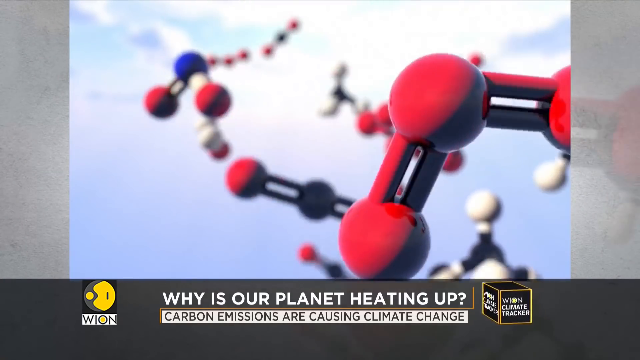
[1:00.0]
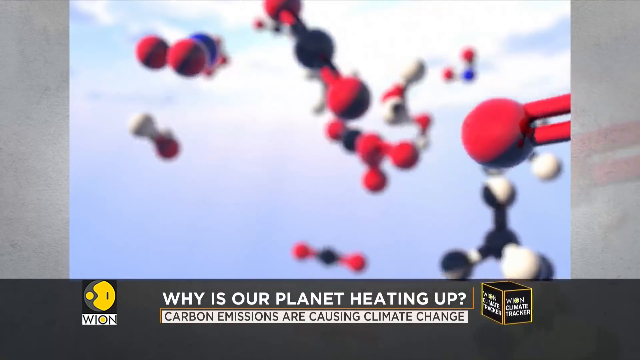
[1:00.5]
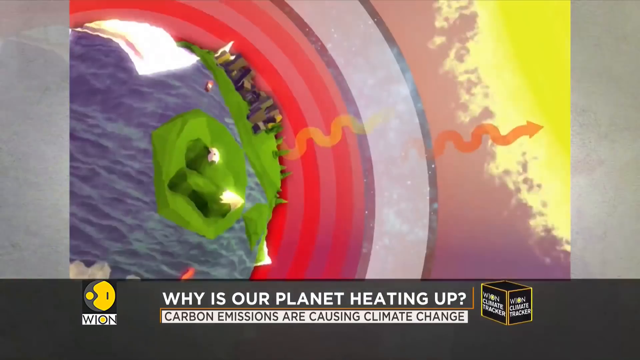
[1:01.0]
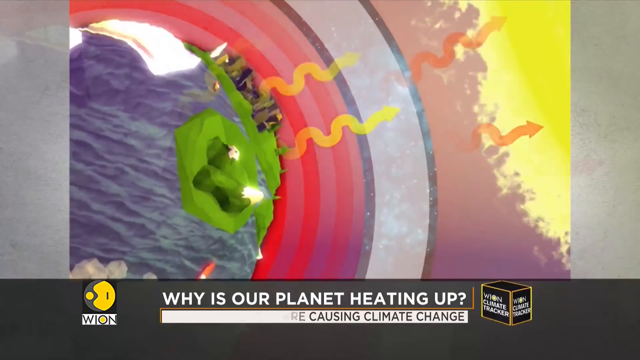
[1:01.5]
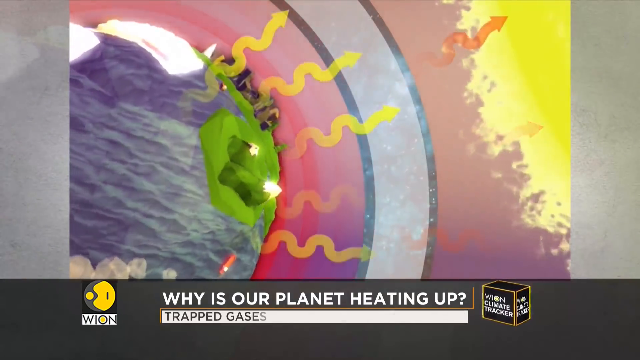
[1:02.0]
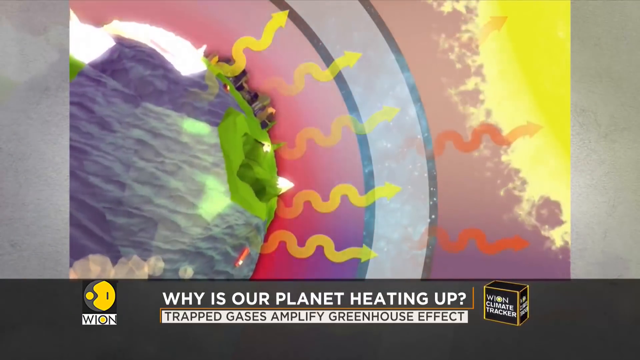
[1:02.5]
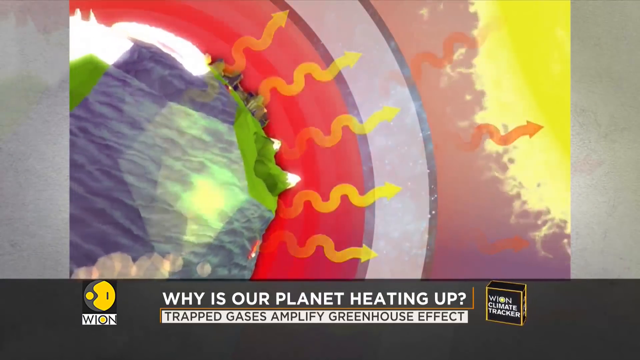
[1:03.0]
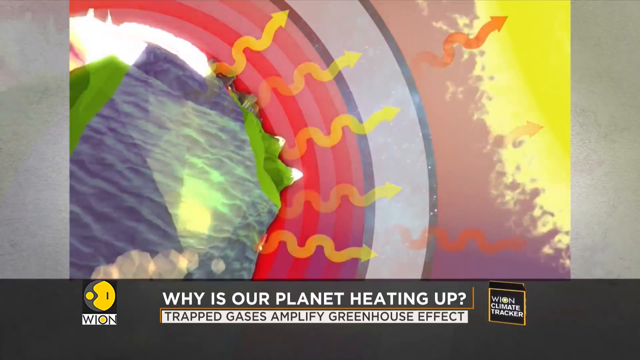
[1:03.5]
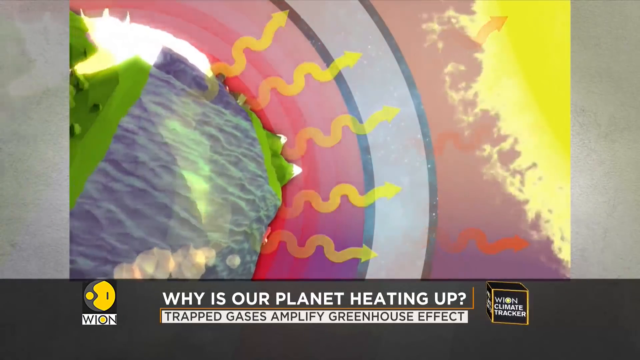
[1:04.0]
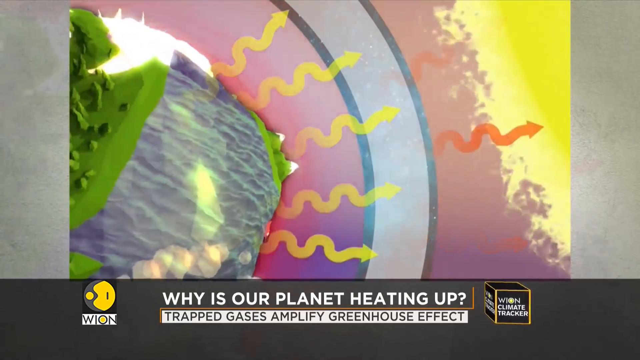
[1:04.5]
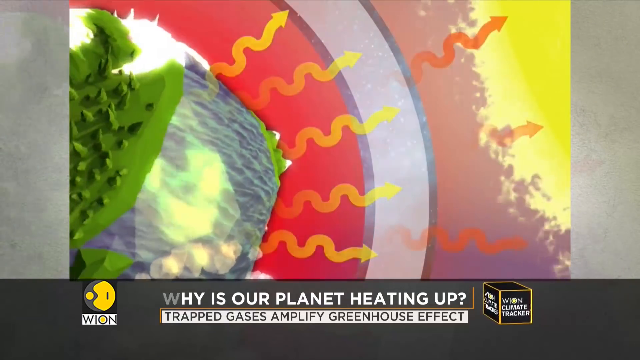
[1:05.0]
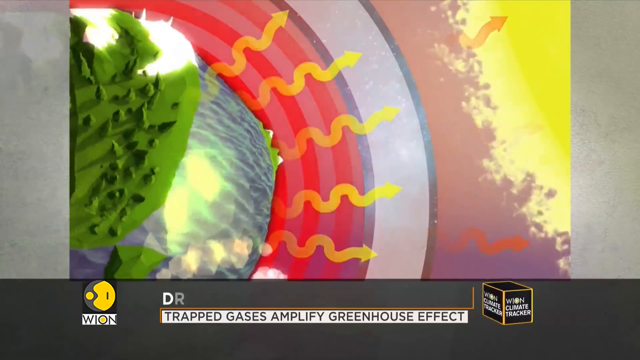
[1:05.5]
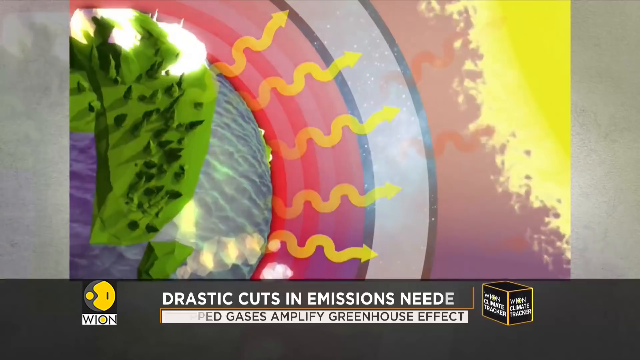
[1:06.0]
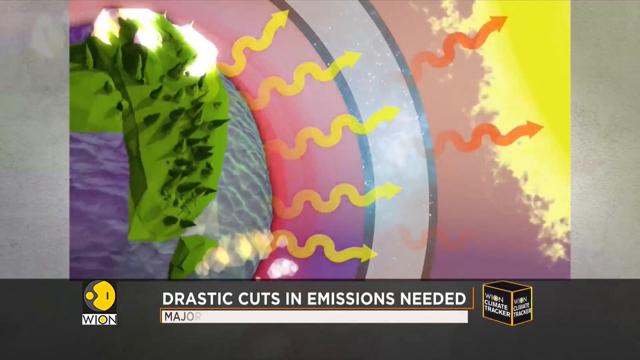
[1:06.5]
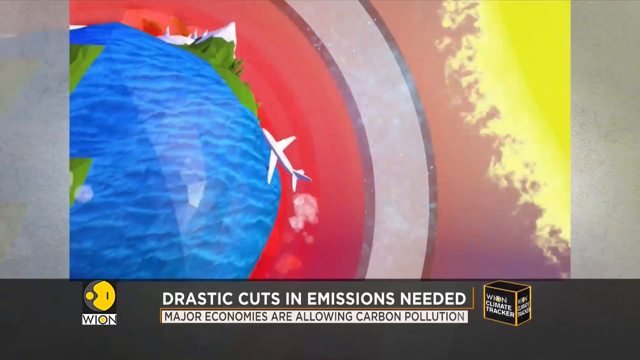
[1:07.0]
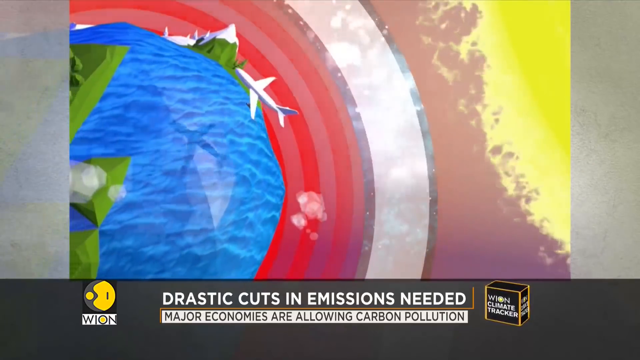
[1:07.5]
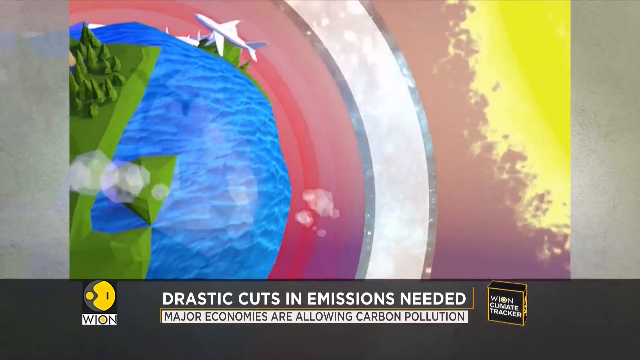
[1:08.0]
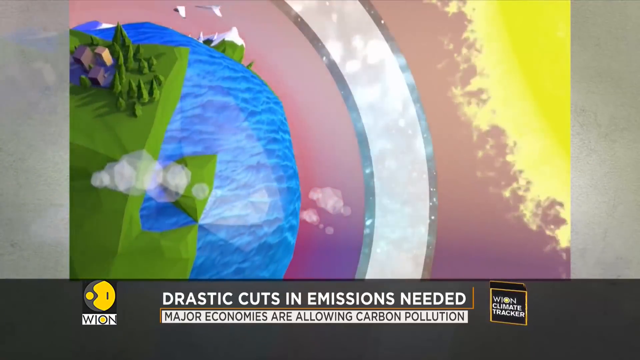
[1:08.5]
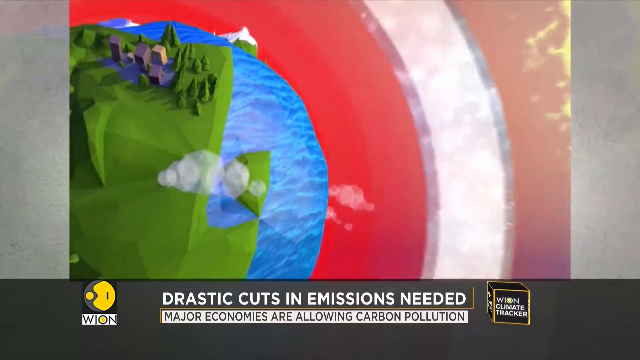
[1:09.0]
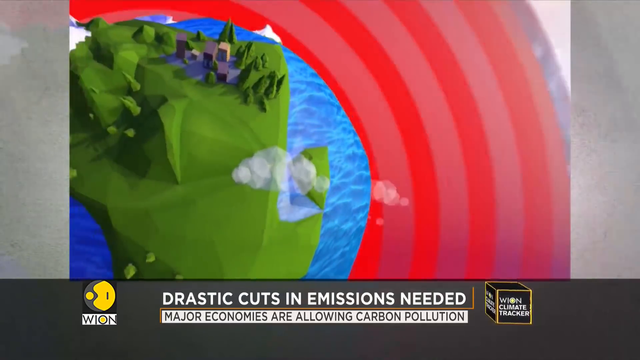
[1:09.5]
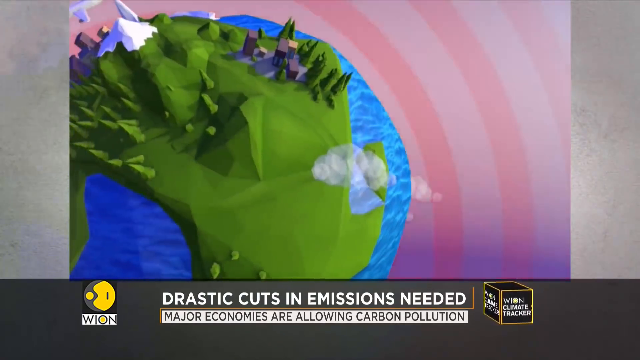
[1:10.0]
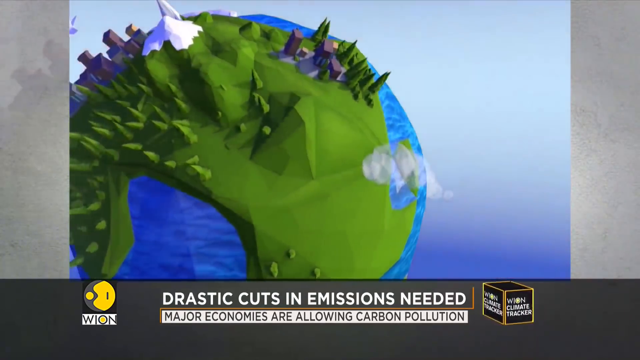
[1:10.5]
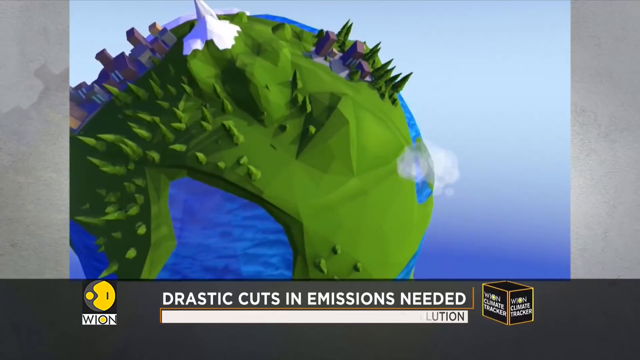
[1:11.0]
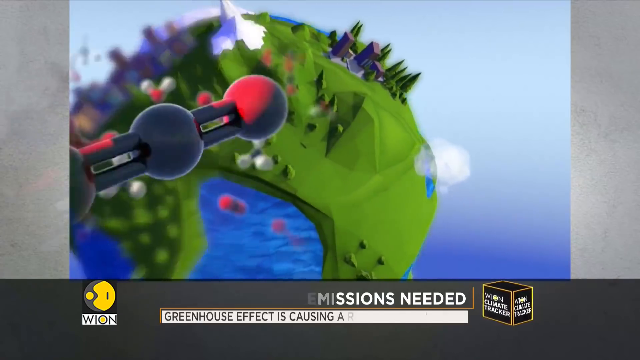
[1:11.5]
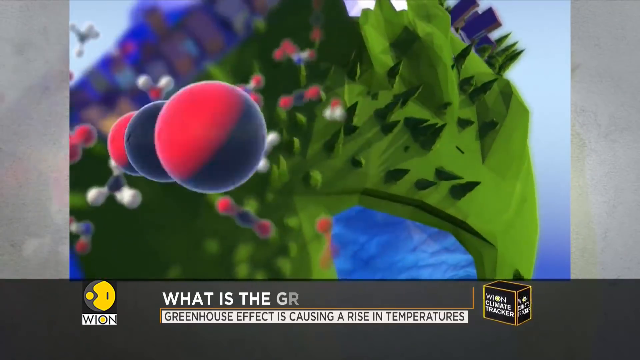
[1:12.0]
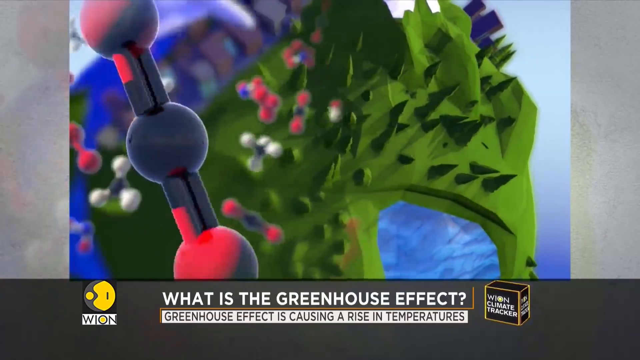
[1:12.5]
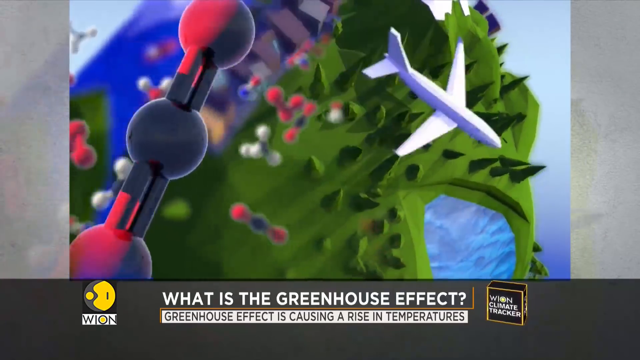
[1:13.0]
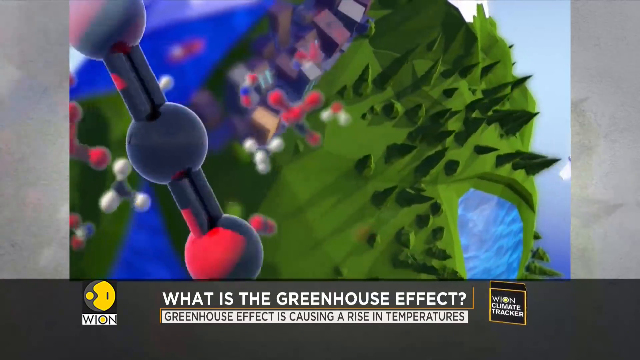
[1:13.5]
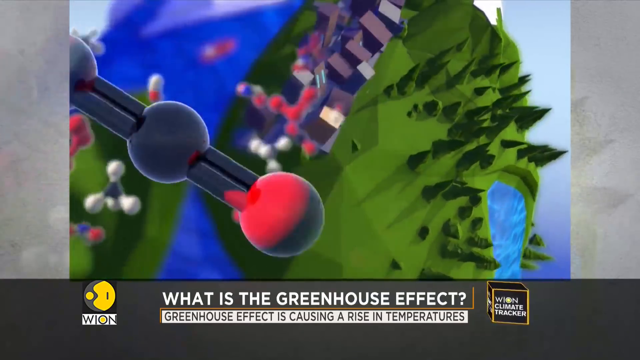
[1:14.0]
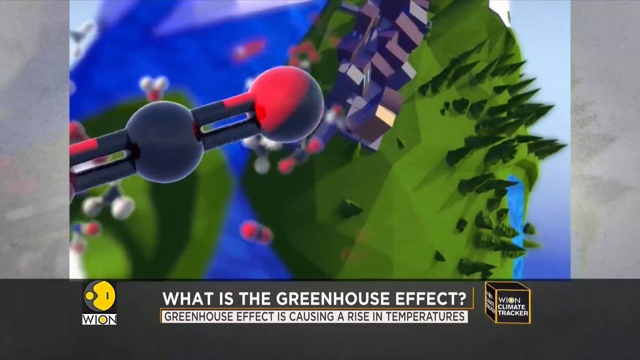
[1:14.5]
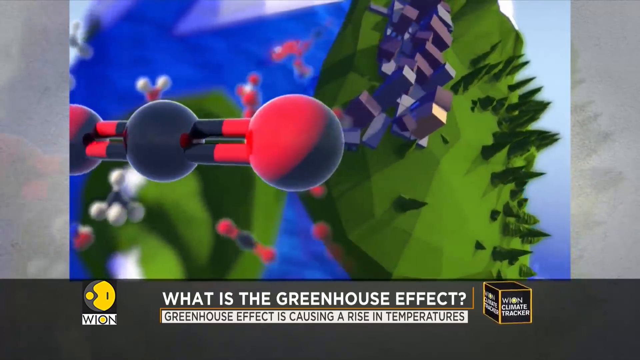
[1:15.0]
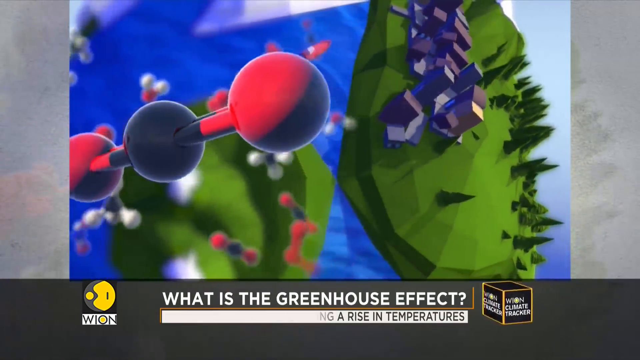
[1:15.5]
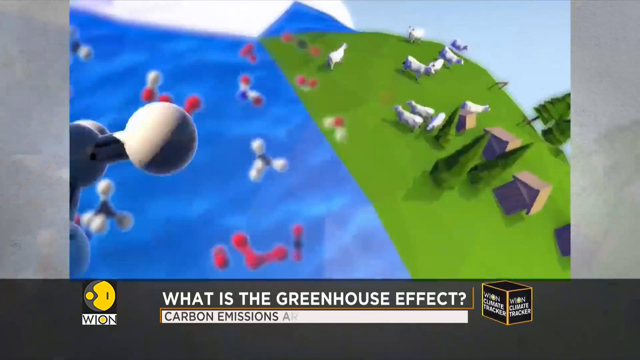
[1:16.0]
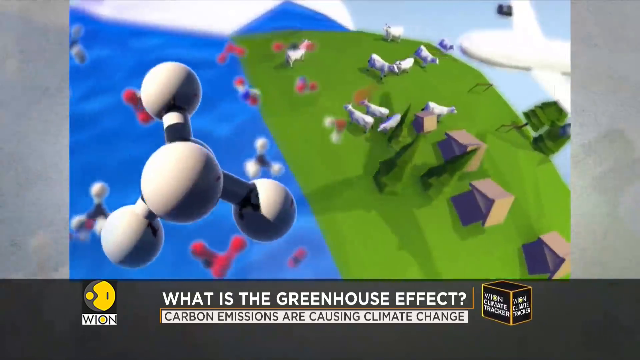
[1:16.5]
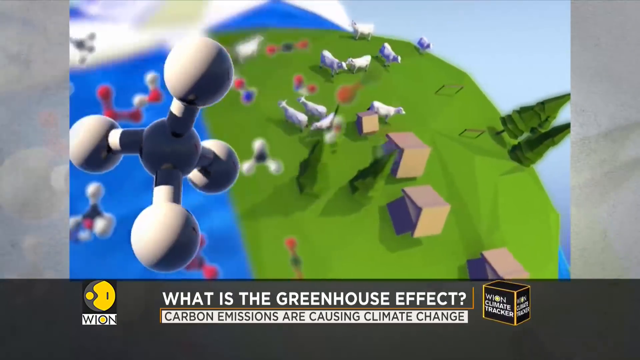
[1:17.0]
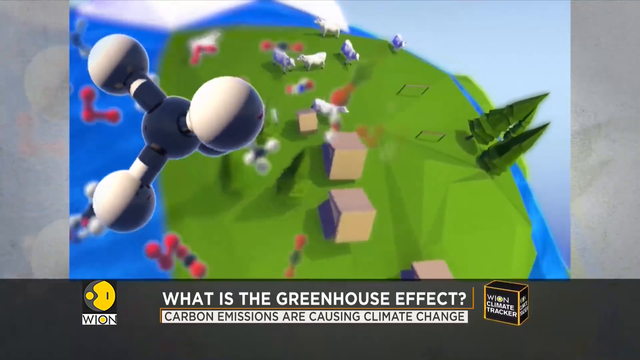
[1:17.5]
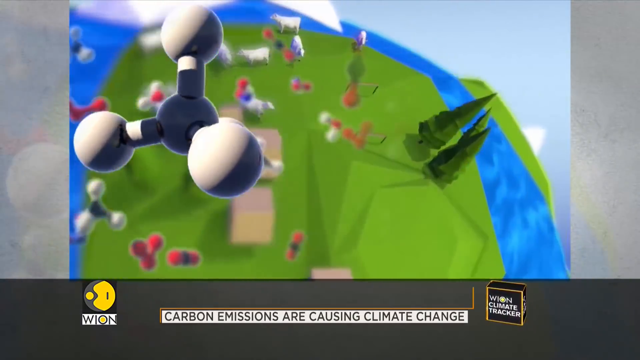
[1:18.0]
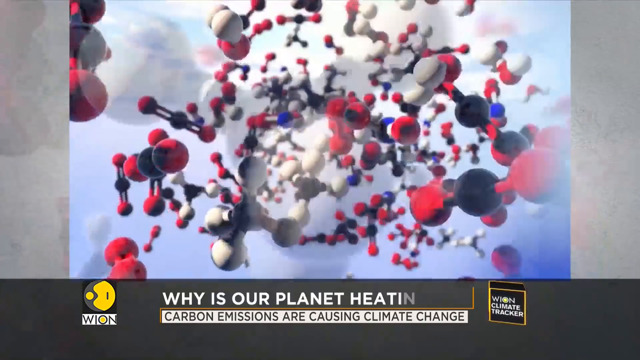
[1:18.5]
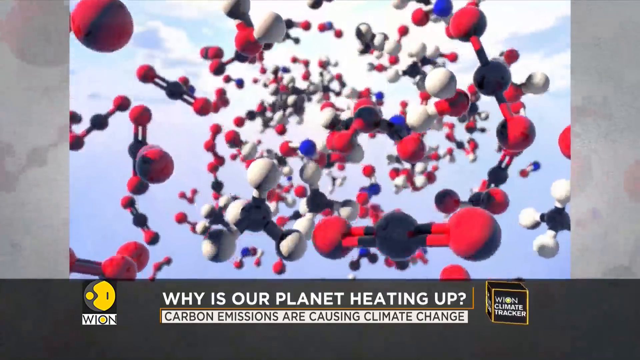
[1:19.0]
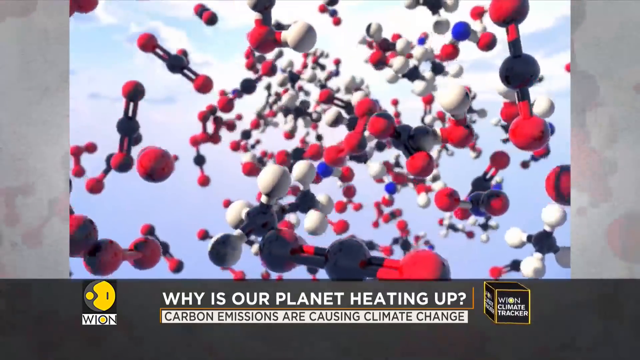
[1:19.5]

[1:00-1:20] The news report shows a depiction of Earth with a large ocean, the ice caps, and green areas that would be vegetation. The graphics continue, and the same words keep repeating at the bottom of the screen, including "what is the greenhouse effect" and "carbon emissions are causing climate change."